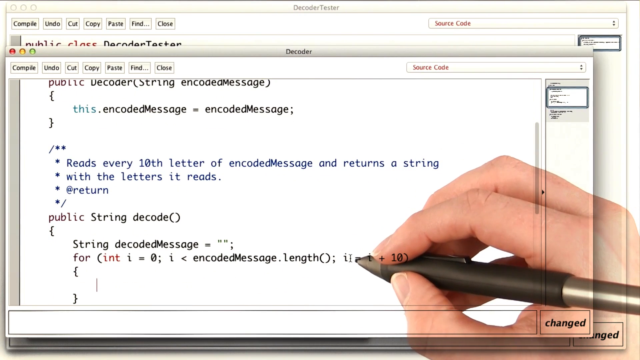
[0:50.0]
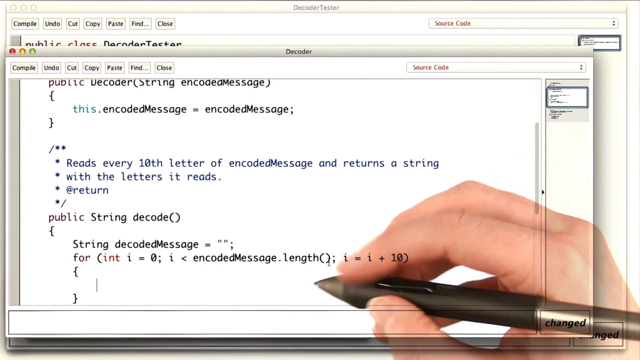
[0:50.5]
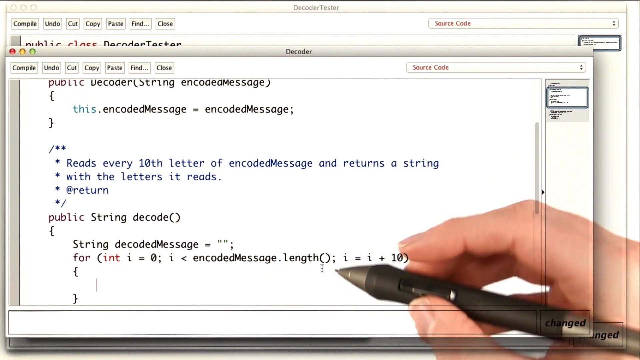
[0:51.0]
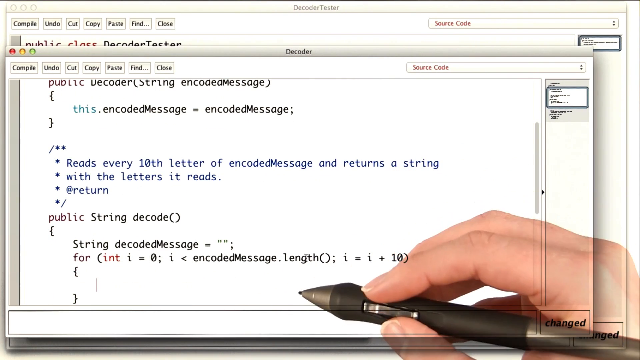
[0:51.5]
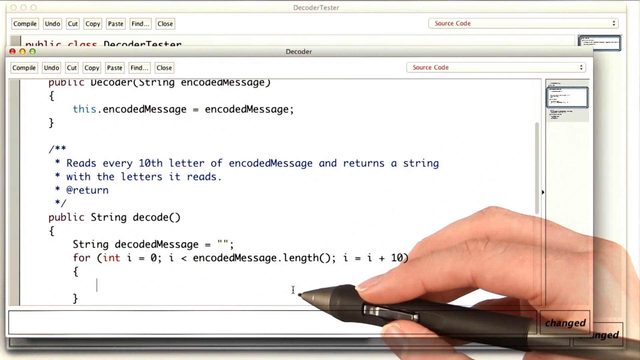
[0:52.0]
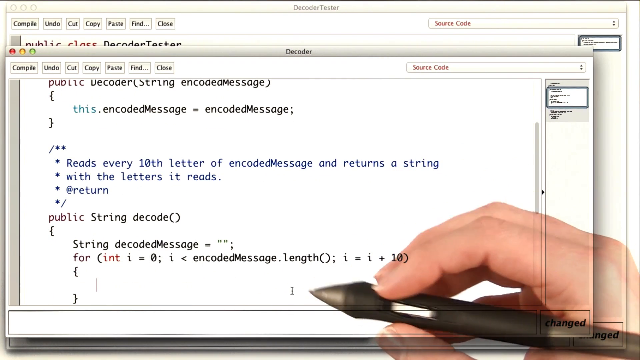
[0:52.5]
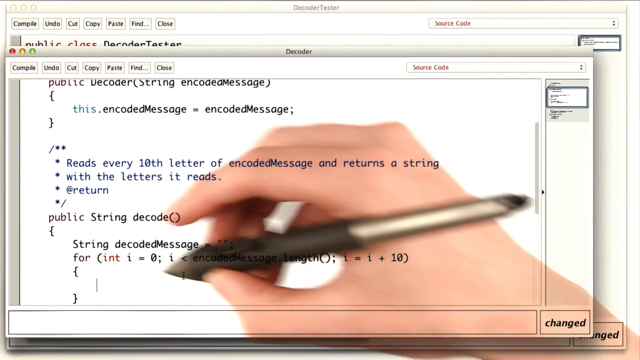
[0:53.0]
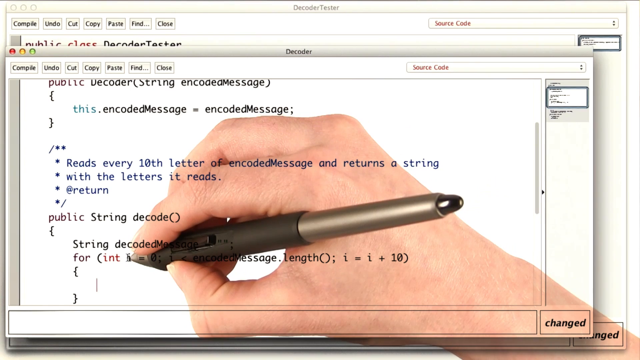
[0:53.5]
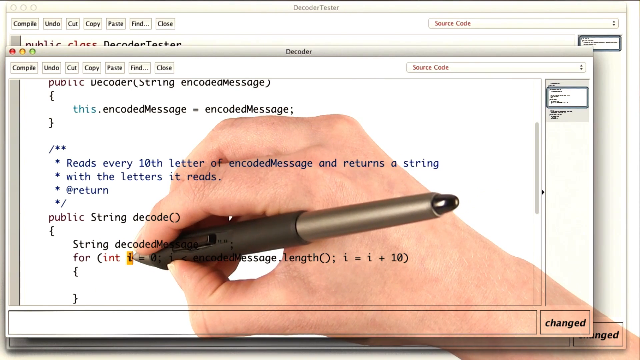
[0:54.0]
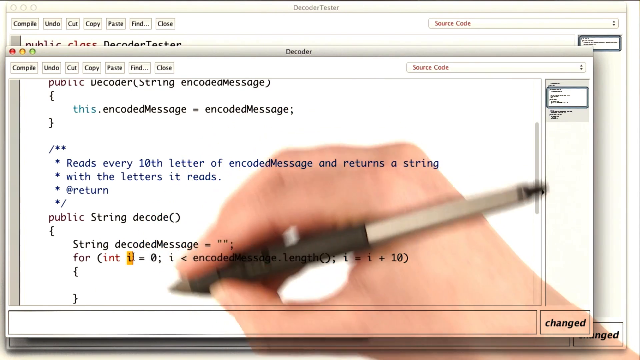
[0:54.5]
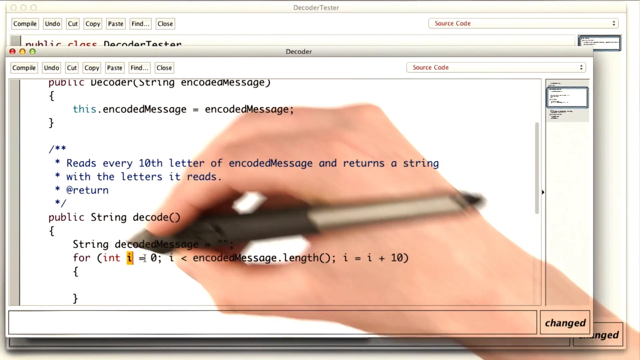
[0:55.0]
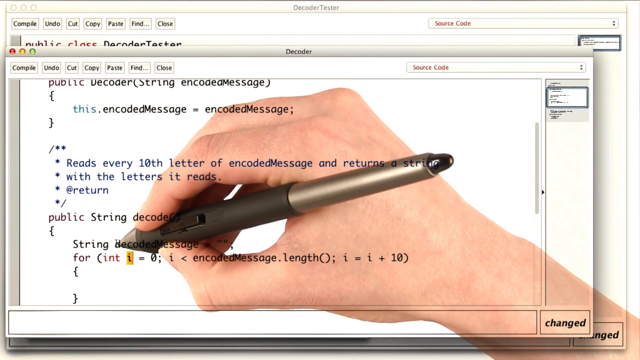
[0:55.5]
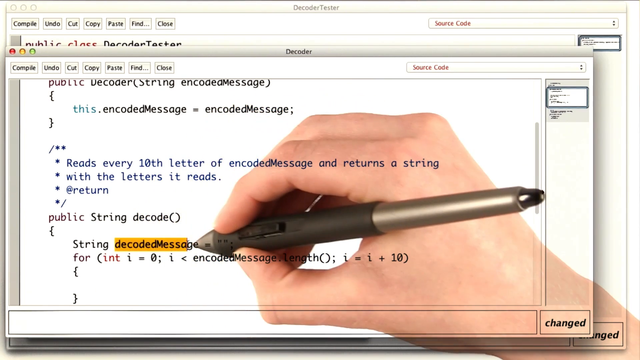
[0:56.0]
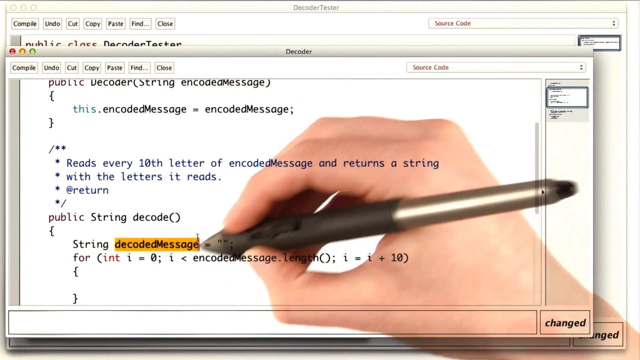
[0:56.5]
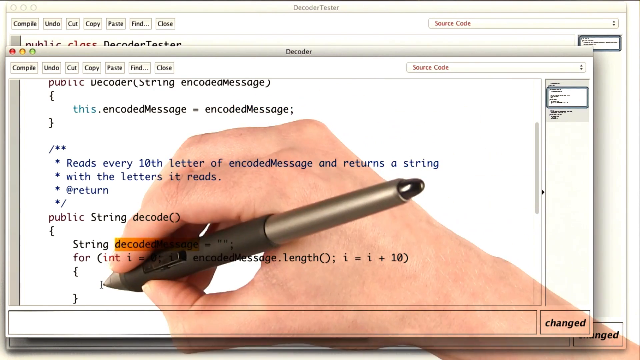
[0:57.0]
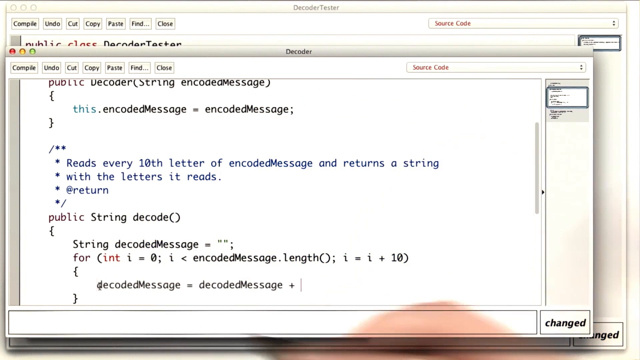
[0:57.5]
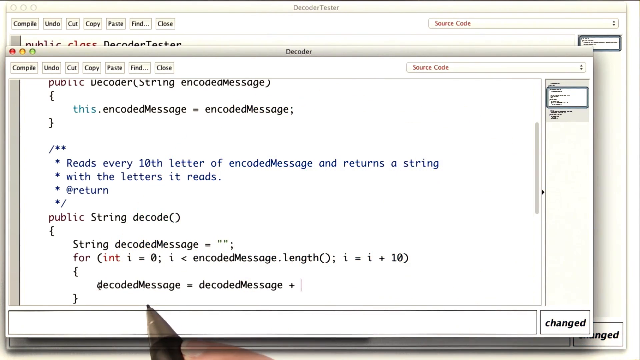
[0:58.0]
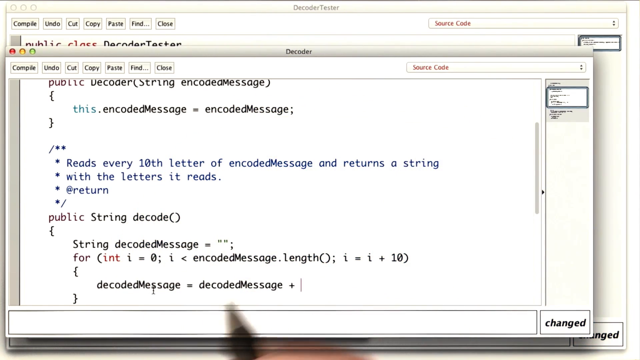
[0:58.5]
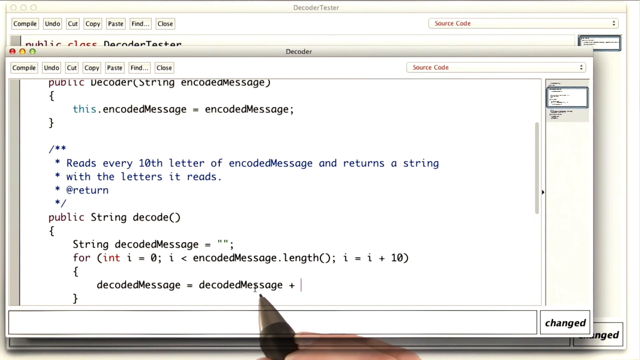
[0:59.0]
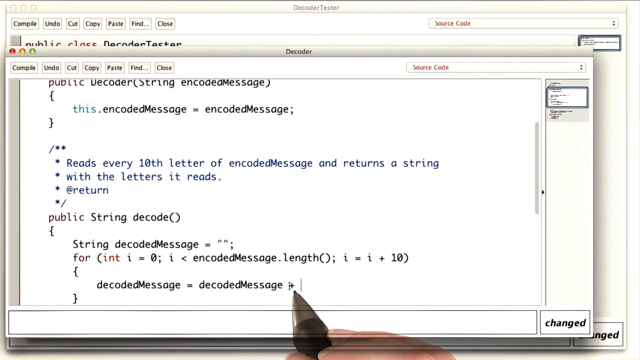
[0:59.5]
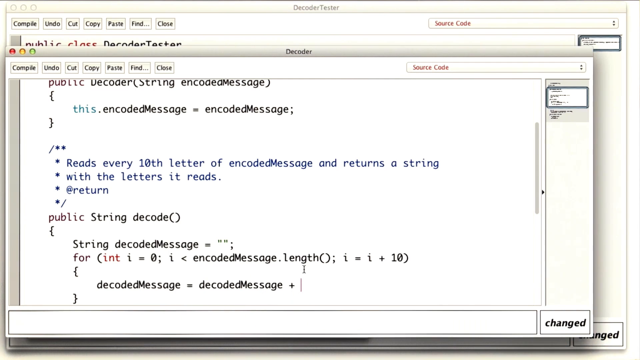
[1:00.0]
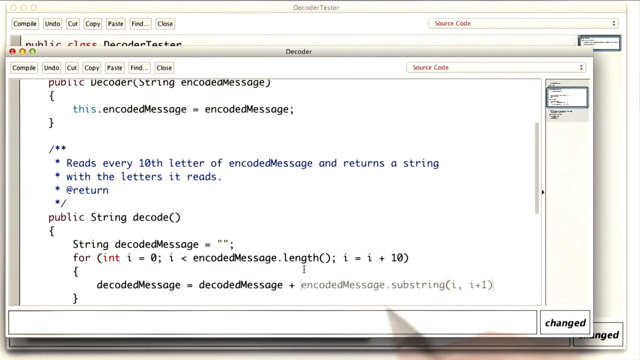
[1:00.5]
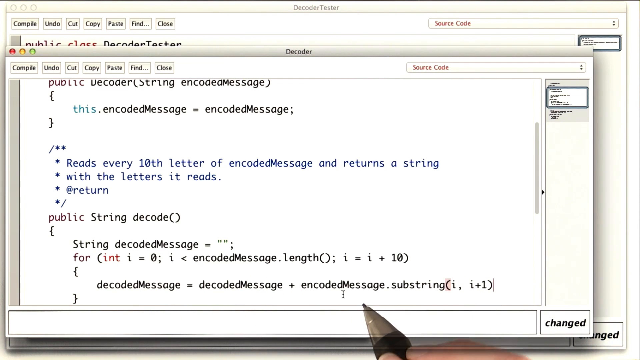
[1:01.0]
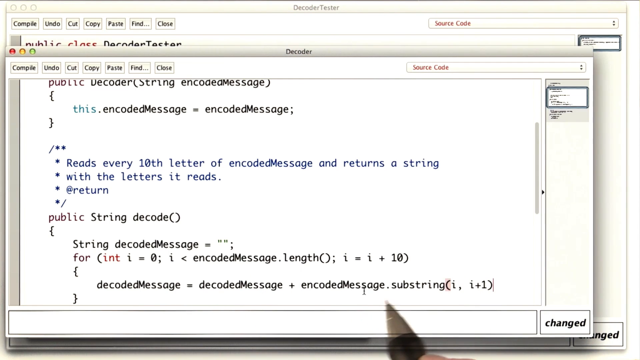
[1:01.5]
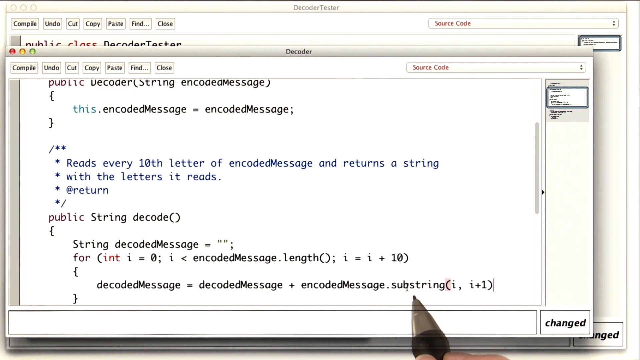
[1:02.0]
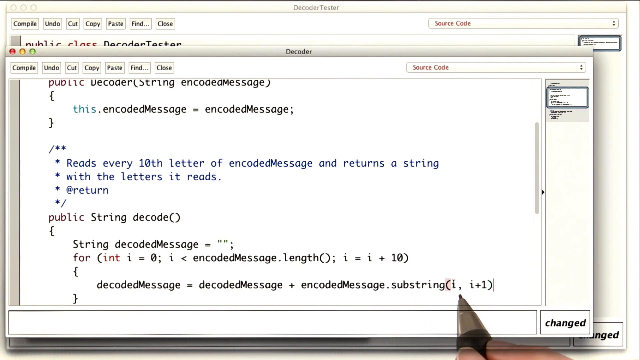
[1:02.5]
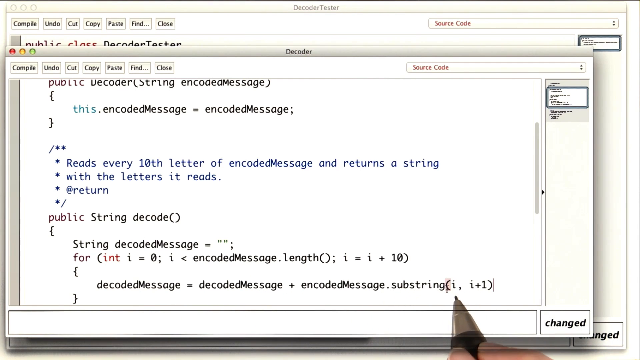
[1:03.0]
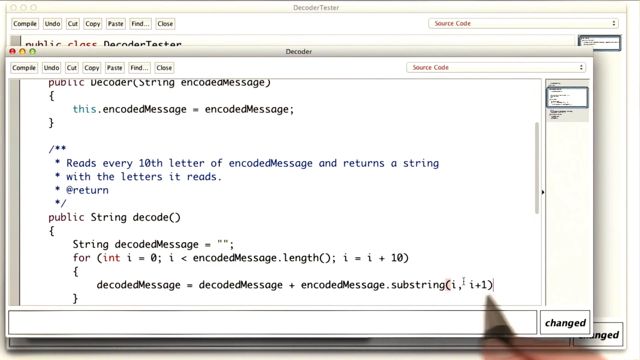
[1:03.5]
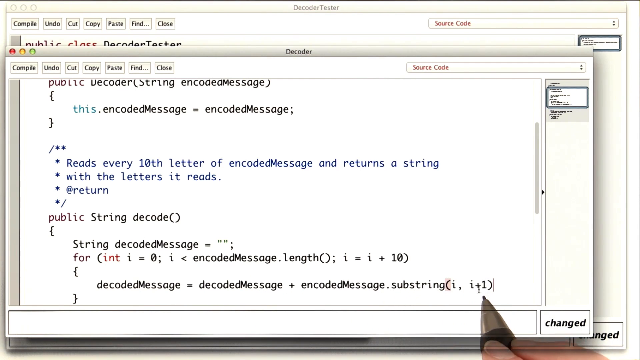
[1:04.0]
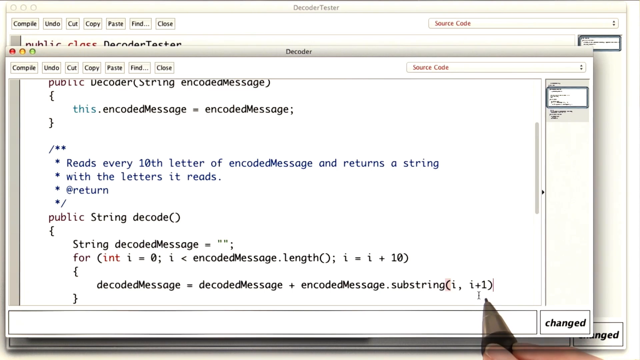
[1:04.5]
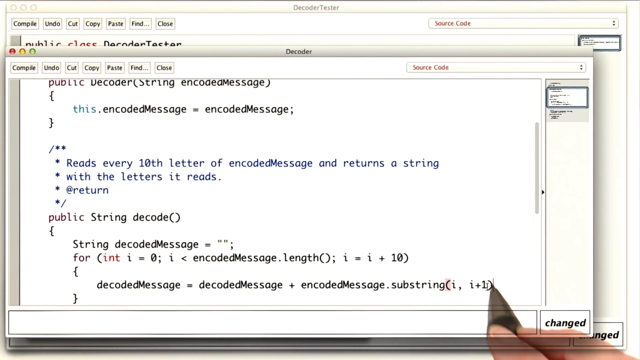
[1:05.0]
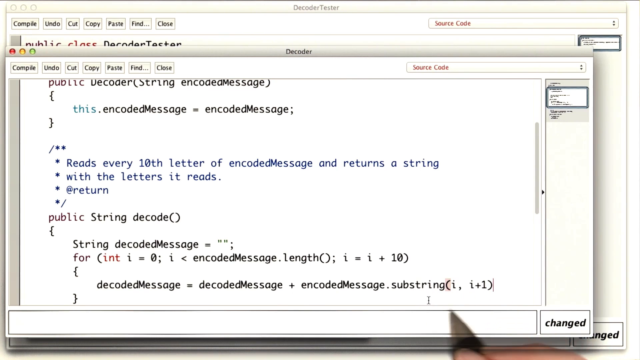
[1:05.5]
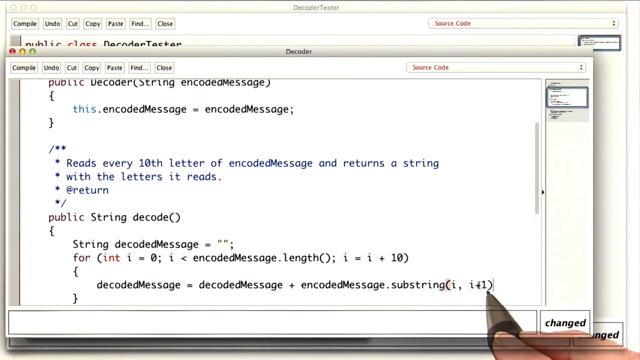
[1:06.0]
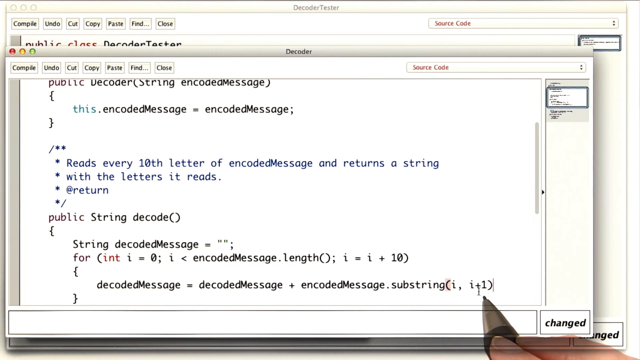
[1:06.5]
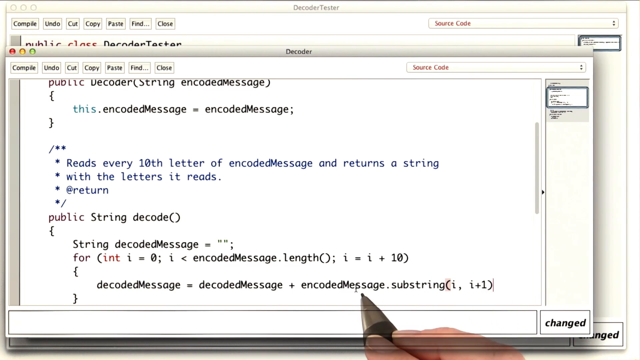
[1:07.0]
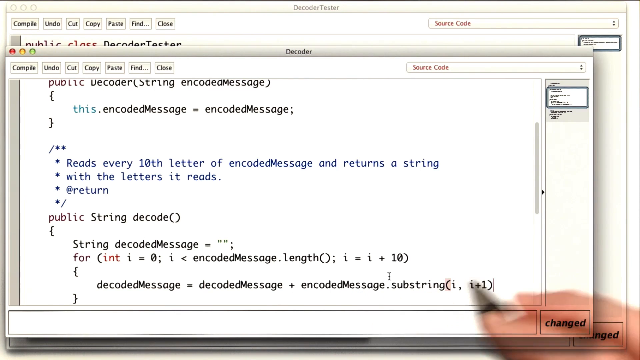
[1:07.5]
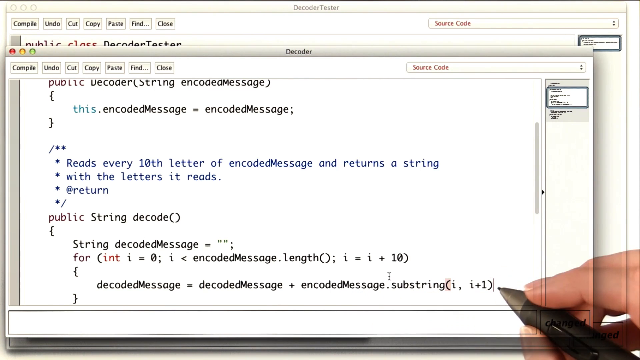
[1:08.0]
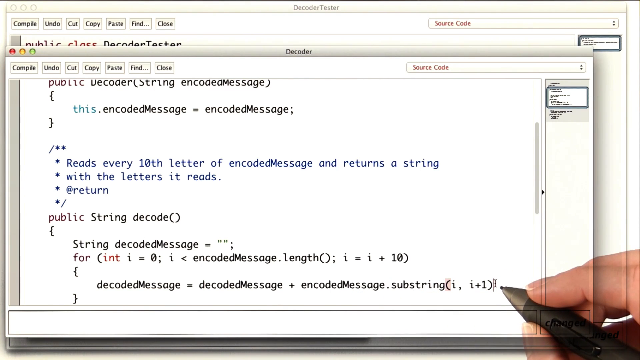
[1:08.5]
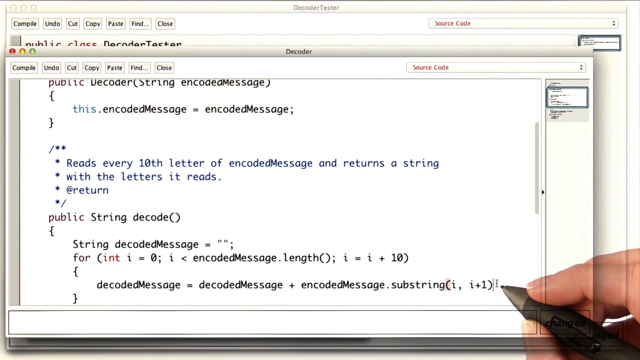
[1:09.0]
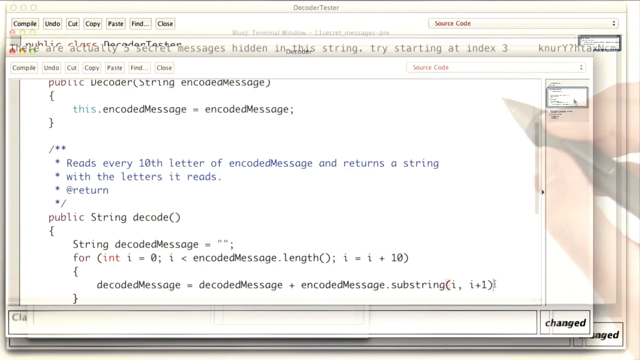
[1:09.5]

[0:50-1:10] The hand holding the black pen keeps writing and making changes on the page. The person highlights the letter I, then highlights decode message, and pastes that into the open section below, which says "decode message equal to decode message plus", followed after the plus sign by "encoded message plus dot substring parenthesis I, I plus one". They use the pen to point out all the newly added text. They then open a new page, a terminal window titled "secret messages", which says "there are actually five secret messages hidden in the string try starting at index three", followed by a bunch of different letters. The pen and the hand are still on screen on the right side of the white page.